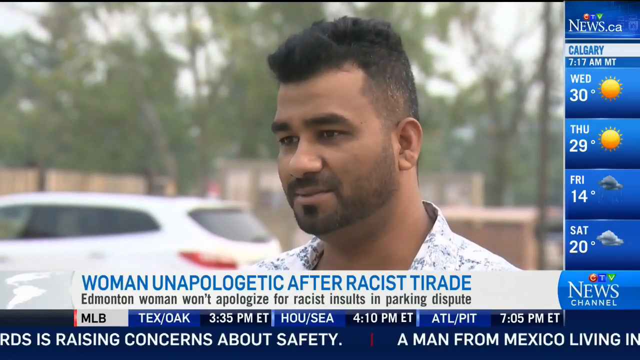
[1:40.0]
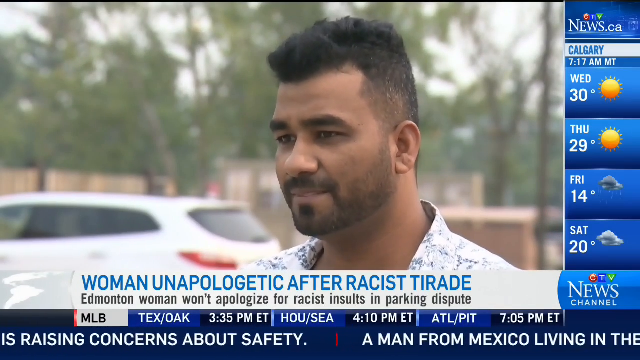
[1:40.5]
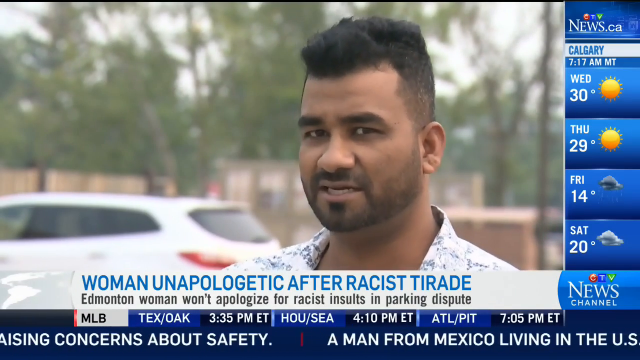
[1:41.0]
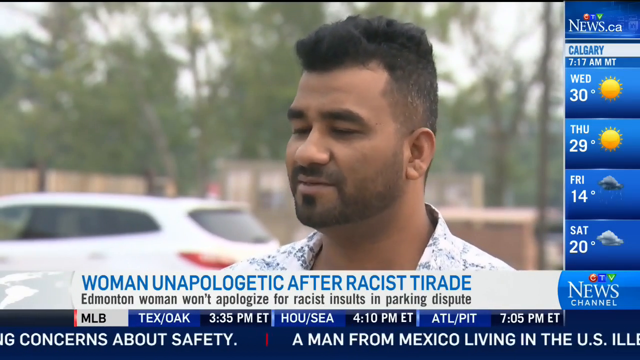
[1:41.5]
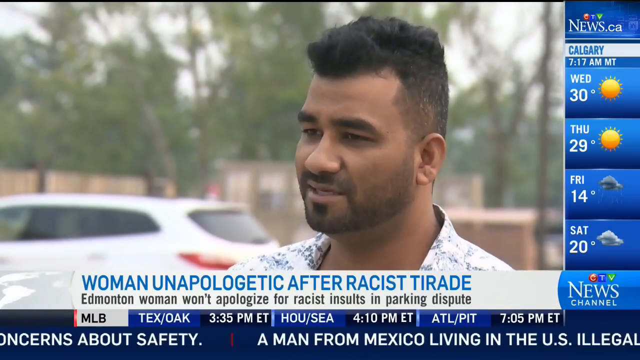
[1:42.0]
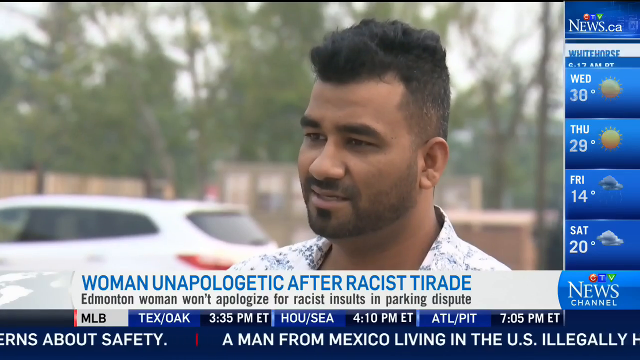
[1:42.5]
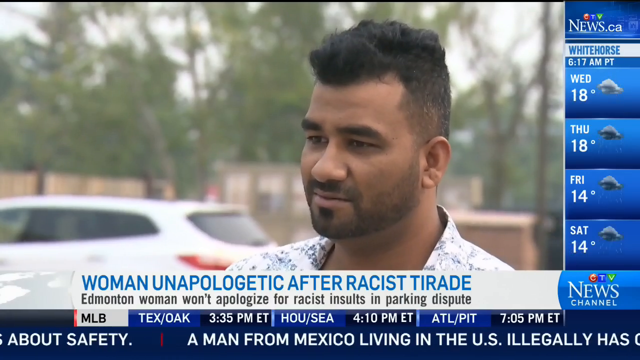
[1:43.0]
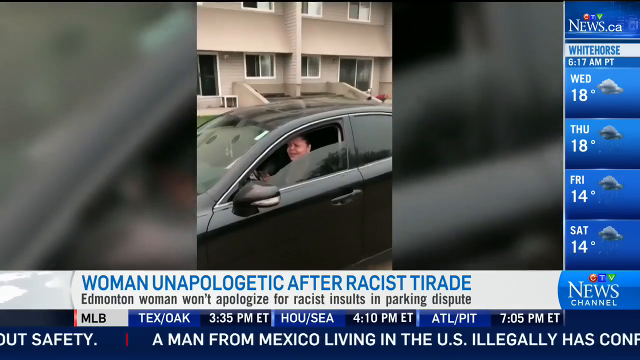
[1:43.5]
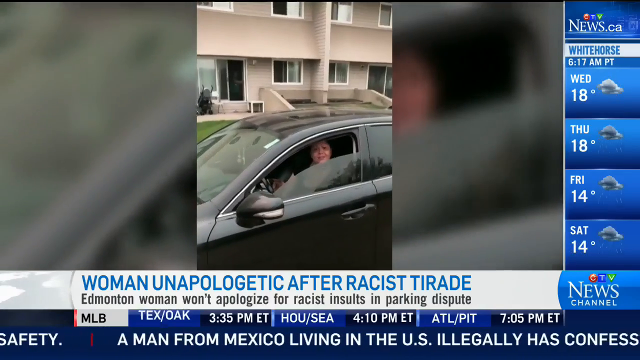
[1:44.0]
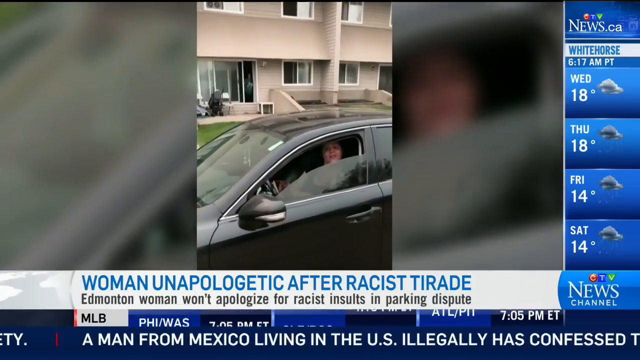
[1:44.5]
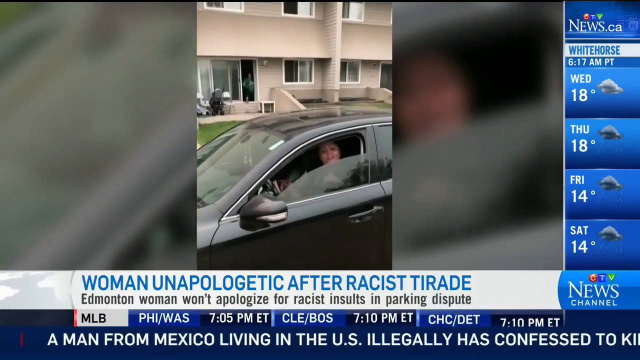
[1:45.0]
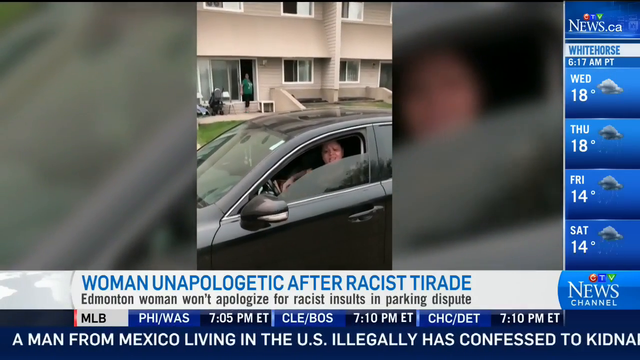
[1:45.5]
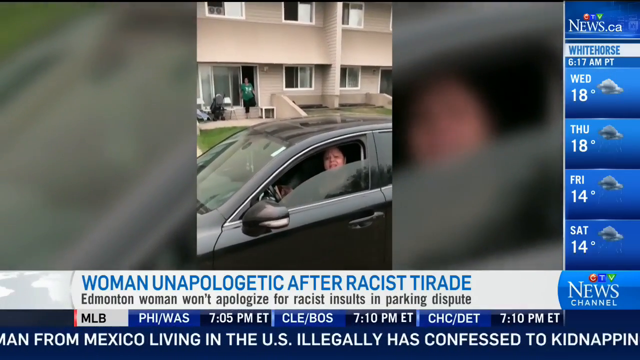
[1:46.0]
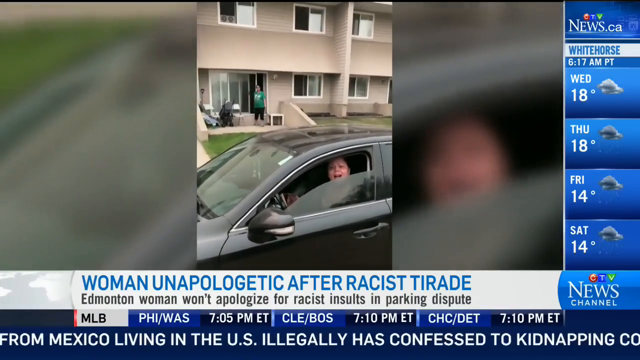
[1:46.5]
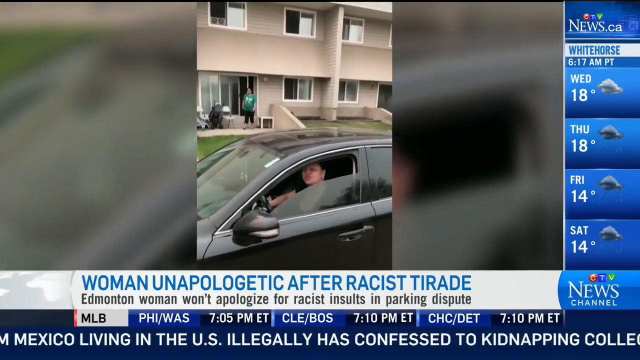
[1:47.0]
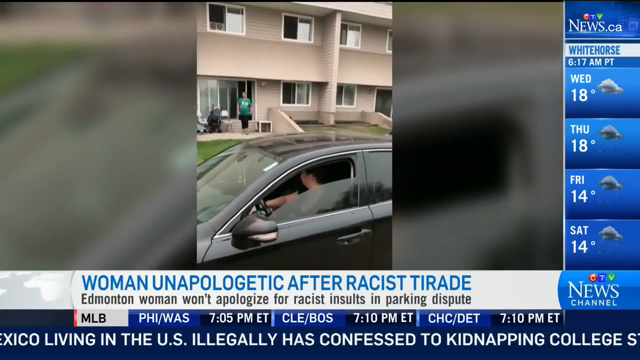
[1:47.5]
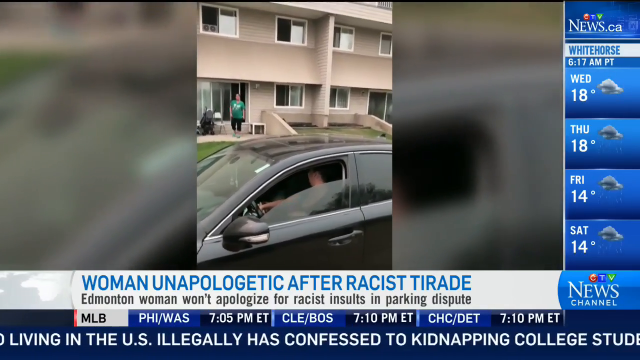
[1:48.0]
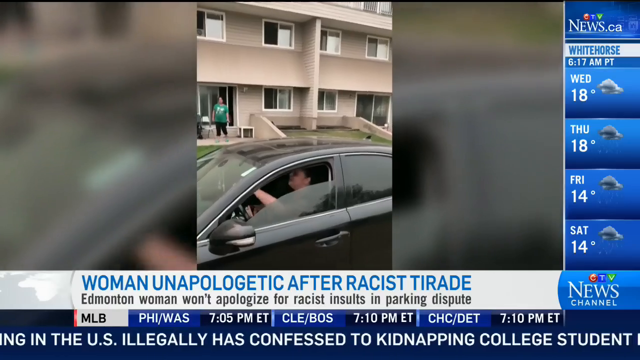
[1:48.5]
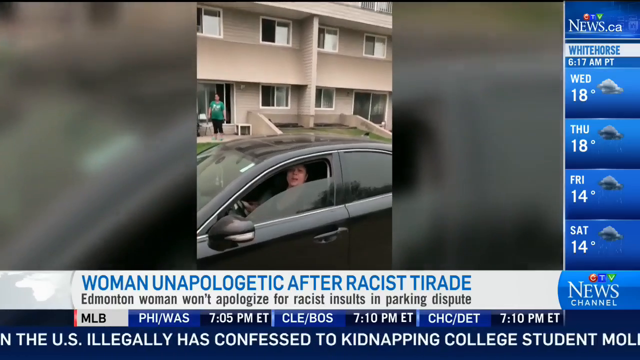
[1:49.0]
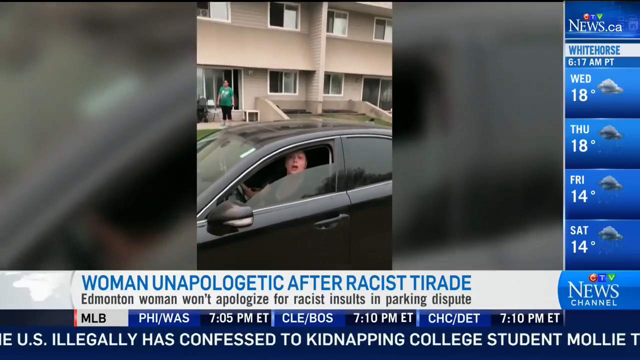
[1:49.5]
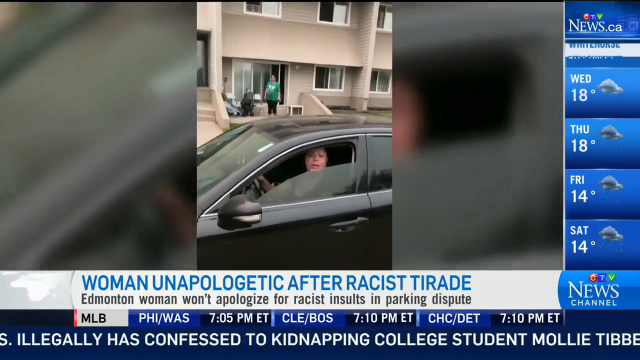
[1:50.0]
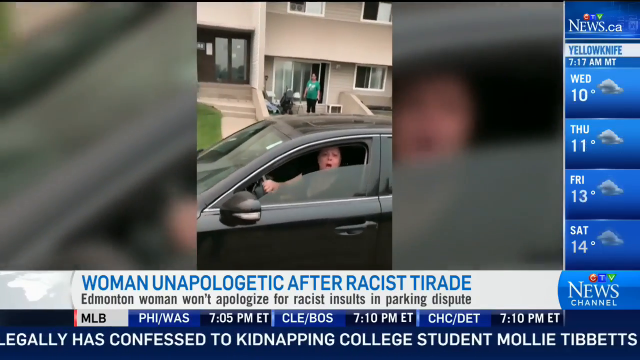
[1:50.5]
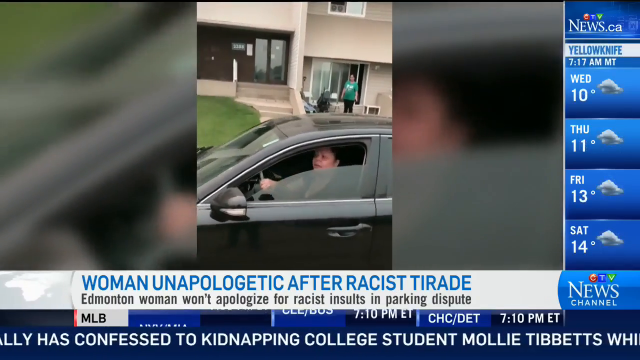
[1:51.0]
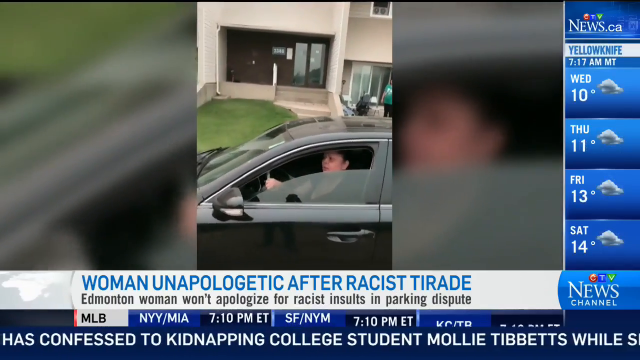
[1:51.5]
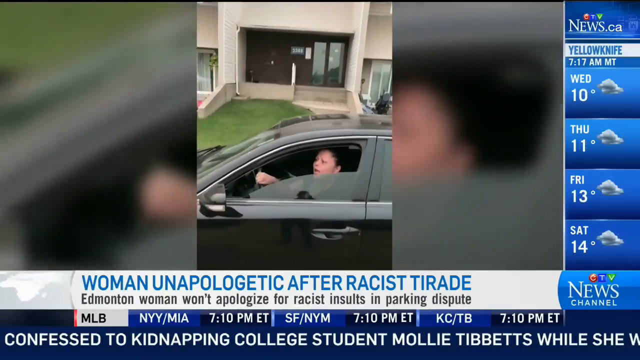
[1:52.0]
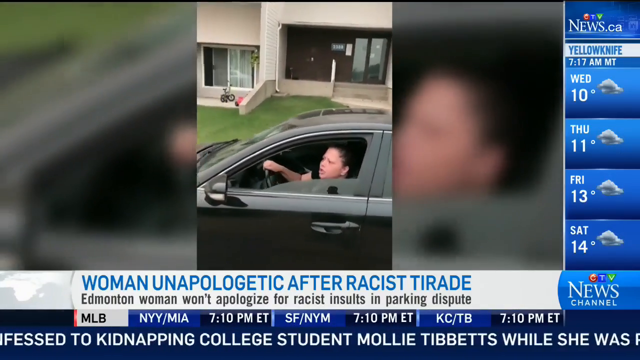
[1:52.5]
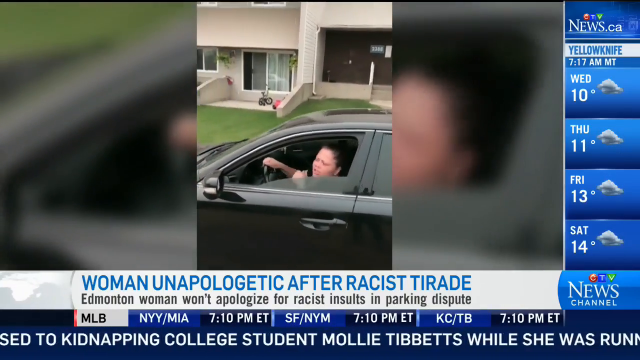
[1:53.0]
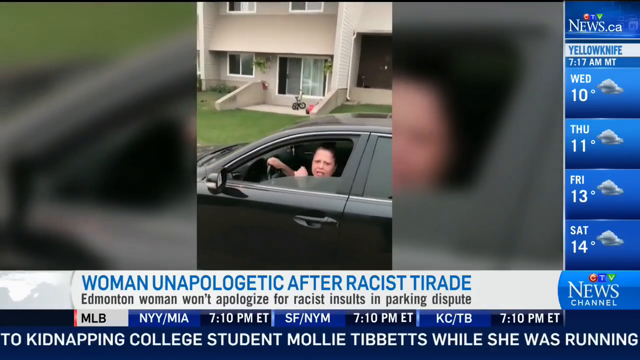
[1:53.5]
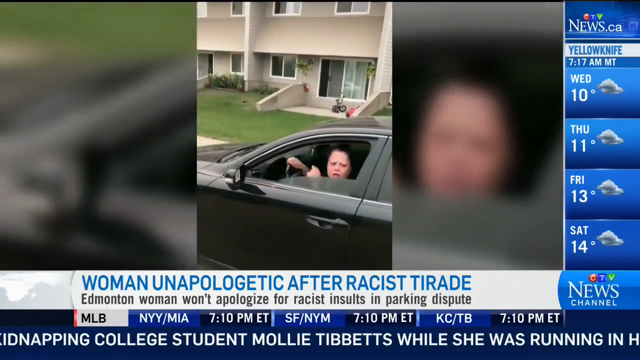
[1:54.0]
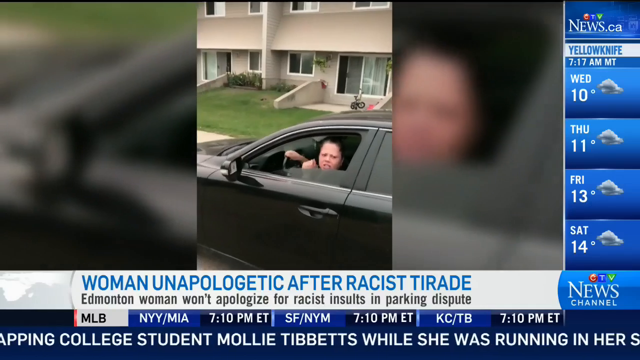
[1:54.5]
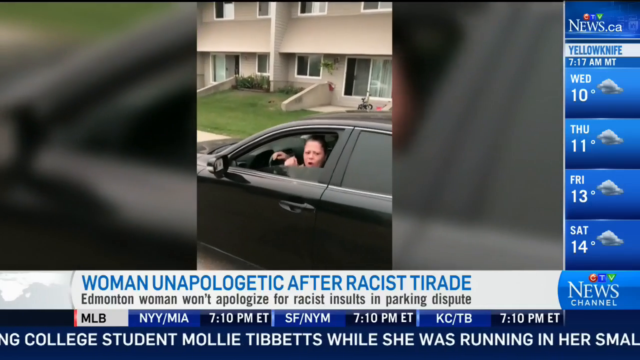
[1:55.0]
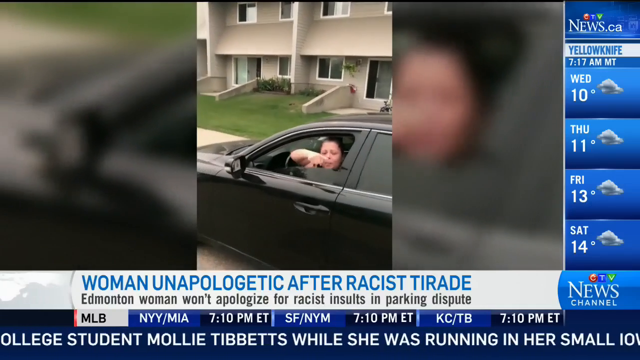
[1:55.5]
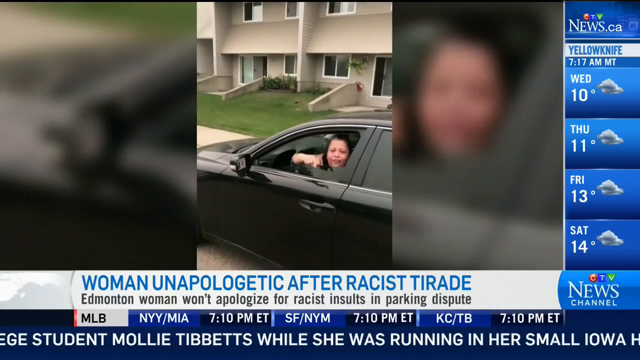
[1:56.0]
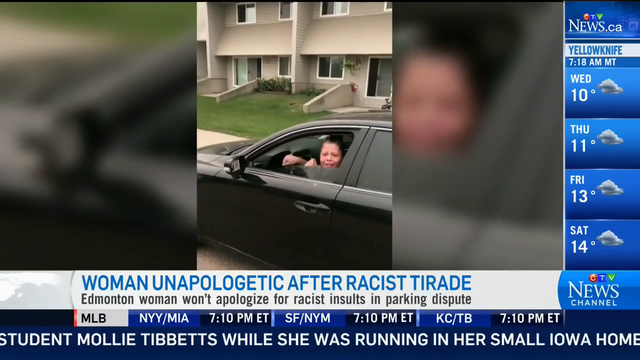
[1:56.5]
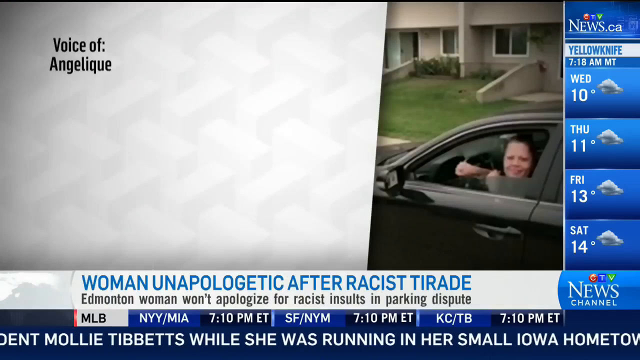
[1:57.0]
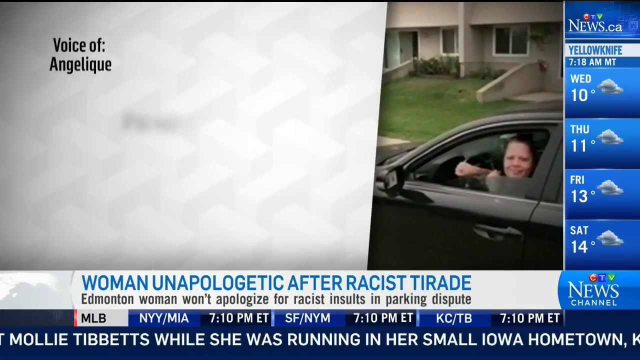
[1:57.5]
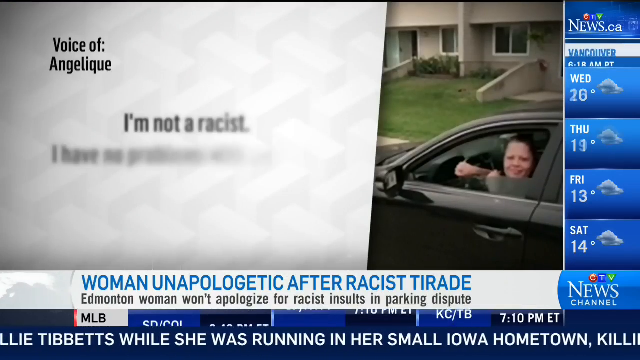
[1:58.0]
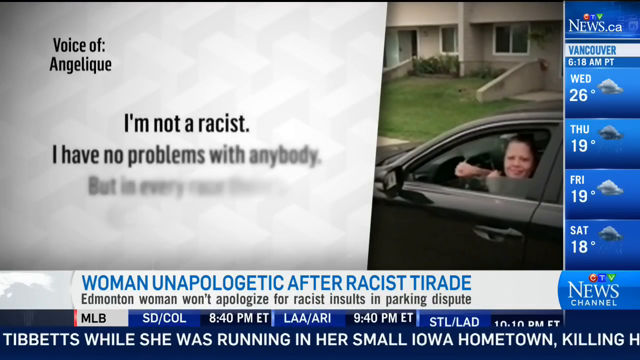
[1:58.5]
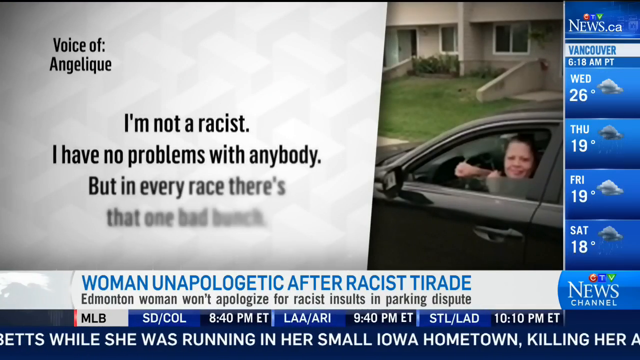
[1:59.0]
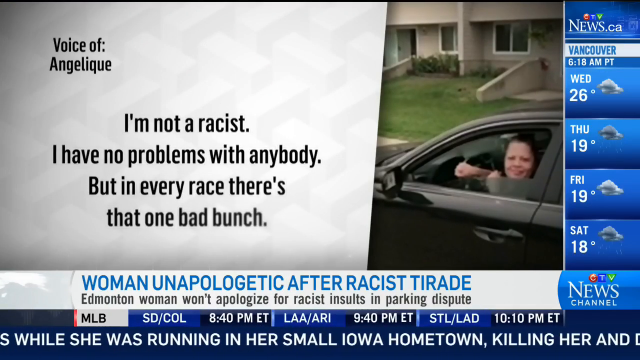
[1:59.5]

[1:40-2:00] A man who looks to be in his early 40s, with a shadow-like beard and what seems to be a button-up shirt, talks to someone, possibly a reporter. The woman is shown again as the situation unfolds once more while she is filmed; she turns her head as she yells at the person holding the camera and points, kind of aggressively. A section of the video reads "voice of Angelique," and text across the screen reads "I am not a racist I have no problems with anybody but in every race there is that one bad bunch." The man may be the person she is yelling at.